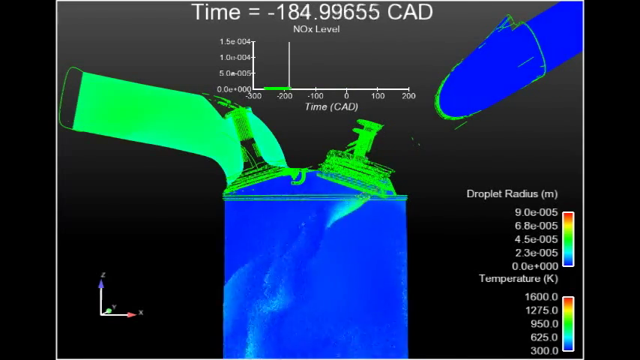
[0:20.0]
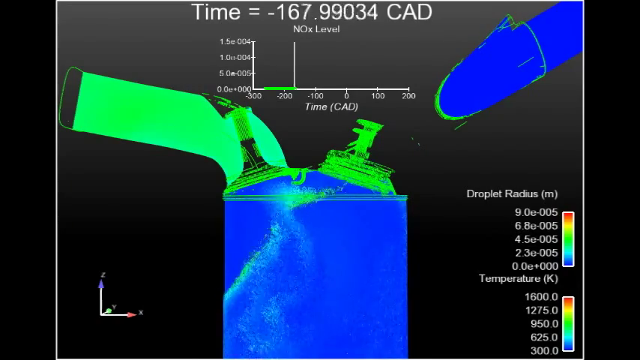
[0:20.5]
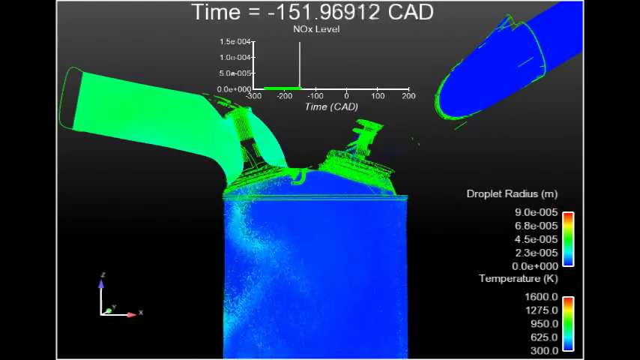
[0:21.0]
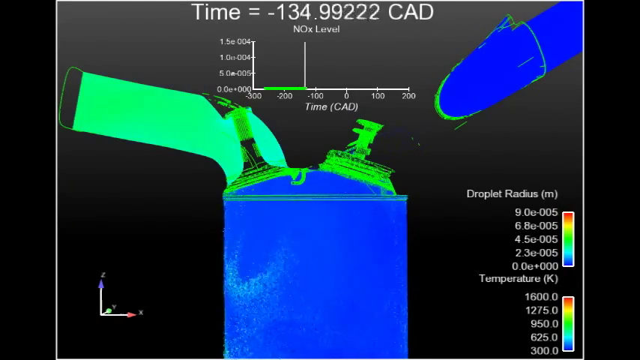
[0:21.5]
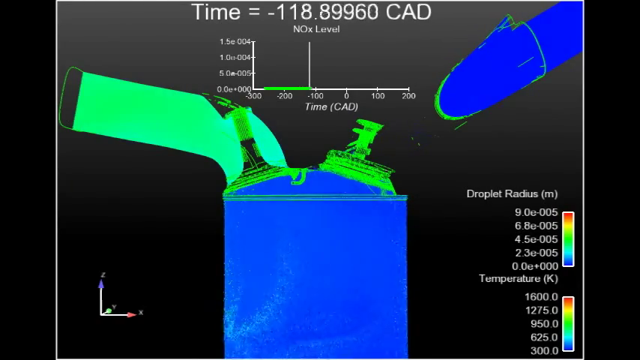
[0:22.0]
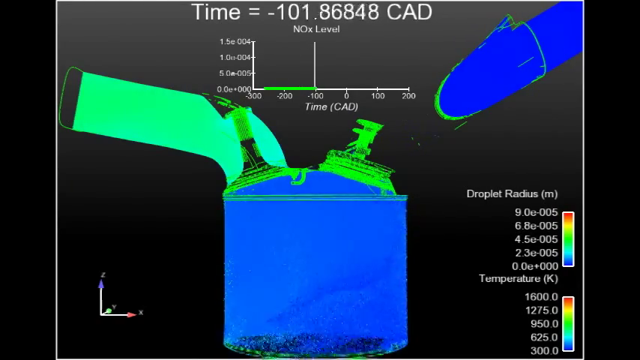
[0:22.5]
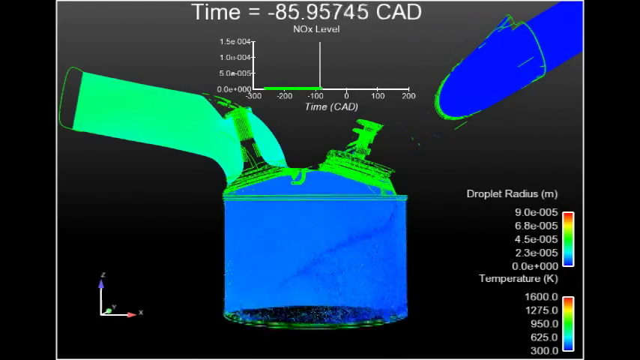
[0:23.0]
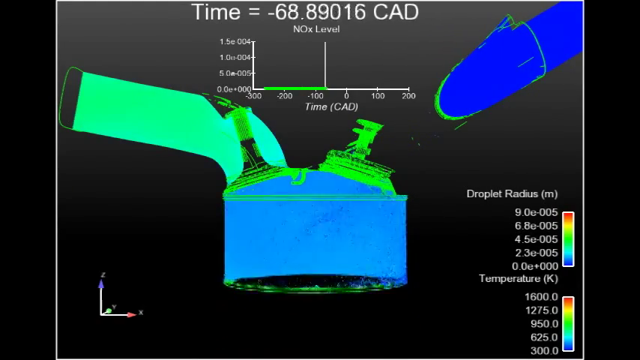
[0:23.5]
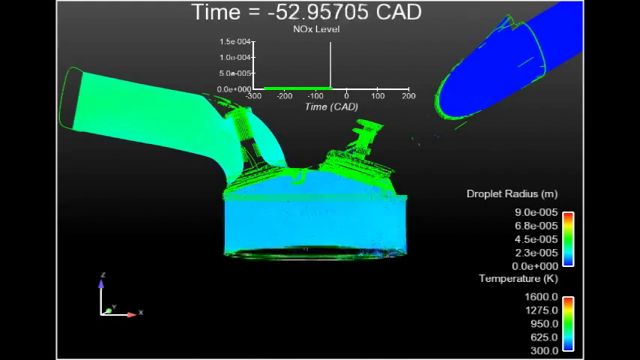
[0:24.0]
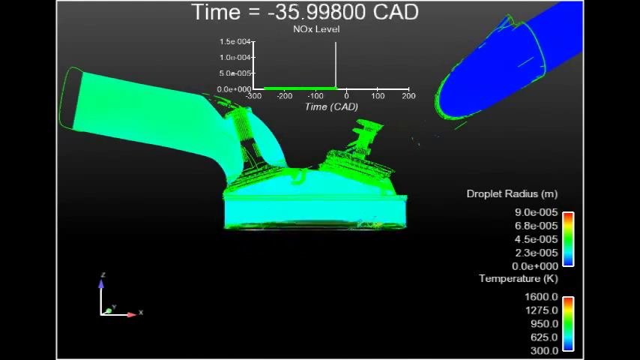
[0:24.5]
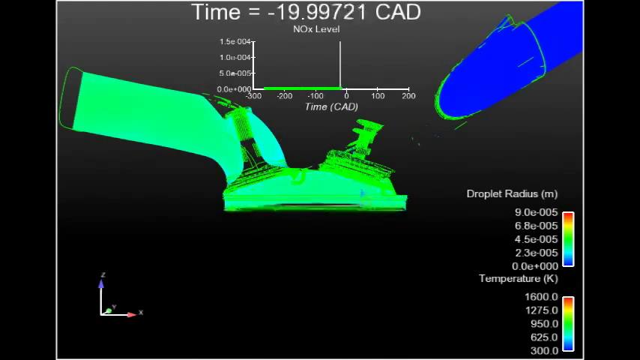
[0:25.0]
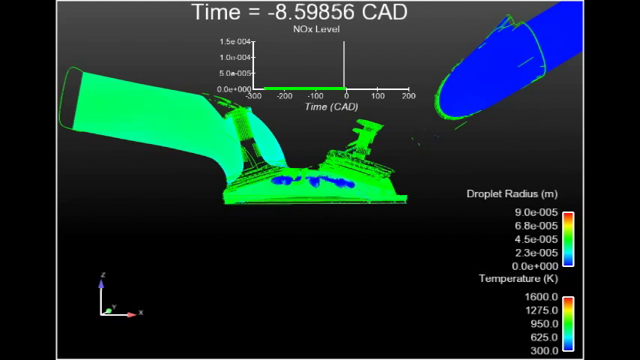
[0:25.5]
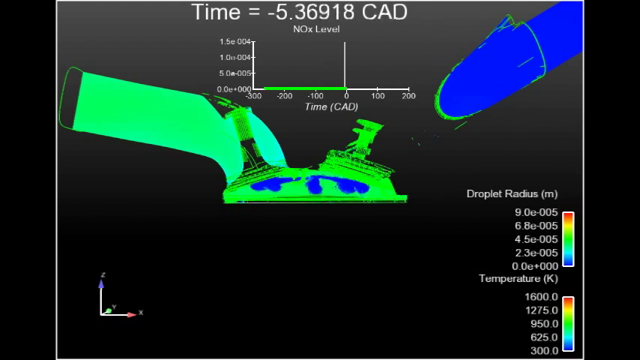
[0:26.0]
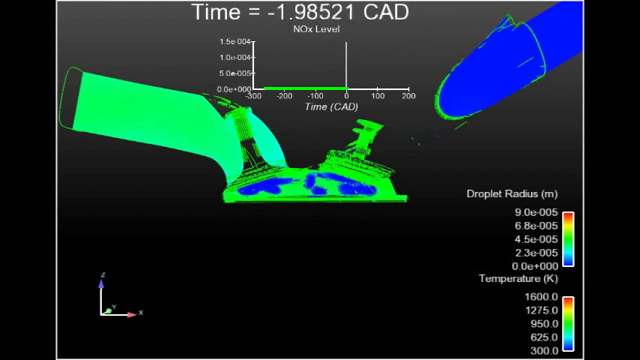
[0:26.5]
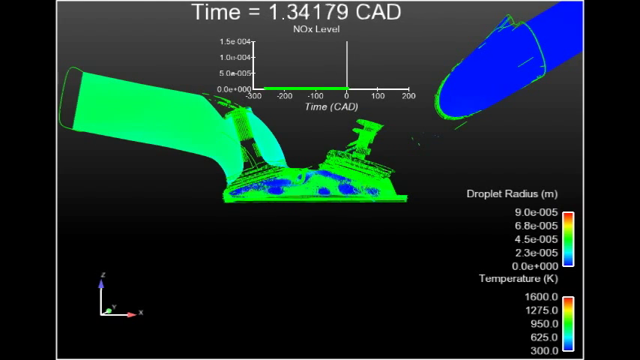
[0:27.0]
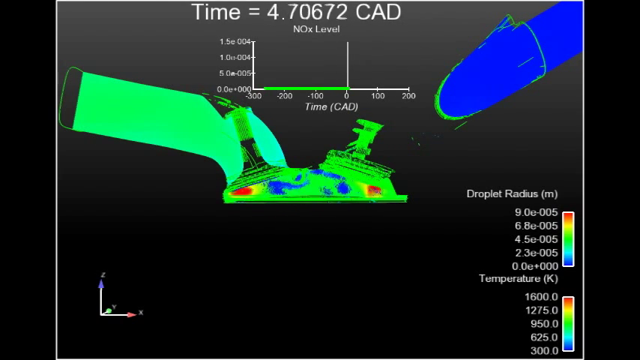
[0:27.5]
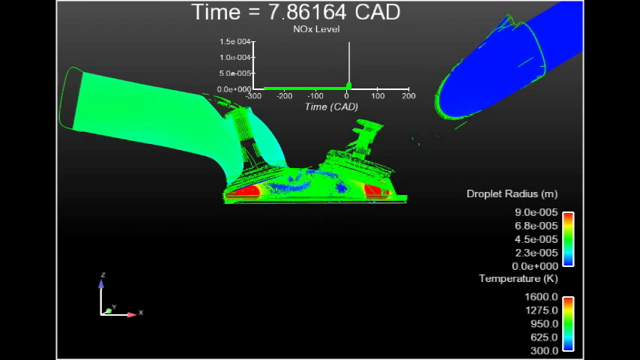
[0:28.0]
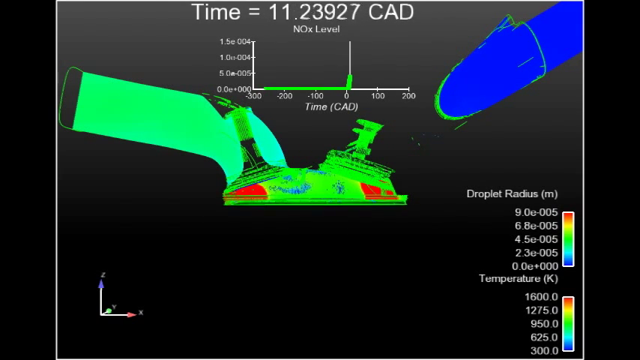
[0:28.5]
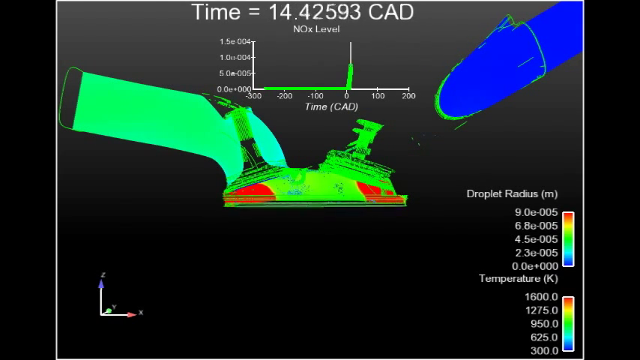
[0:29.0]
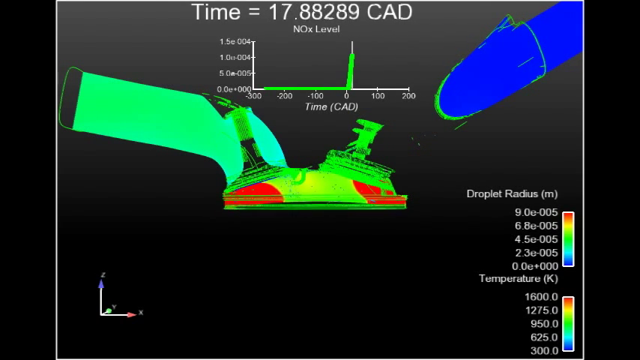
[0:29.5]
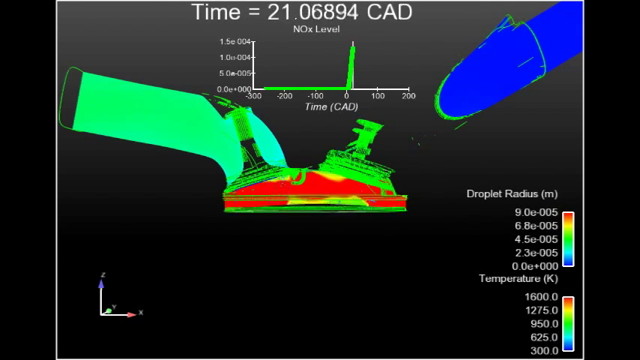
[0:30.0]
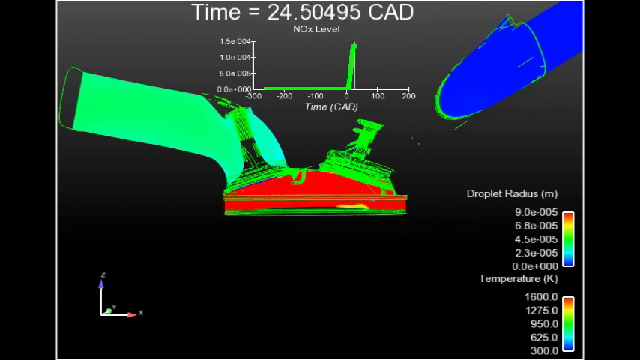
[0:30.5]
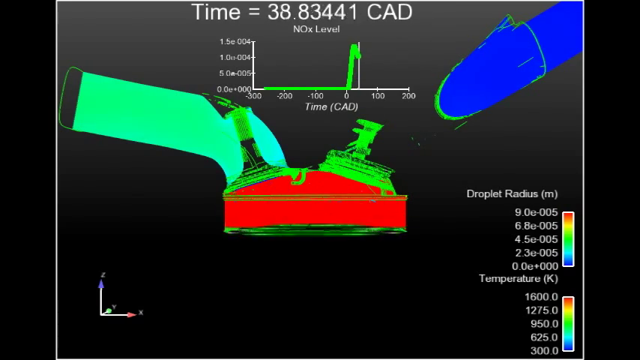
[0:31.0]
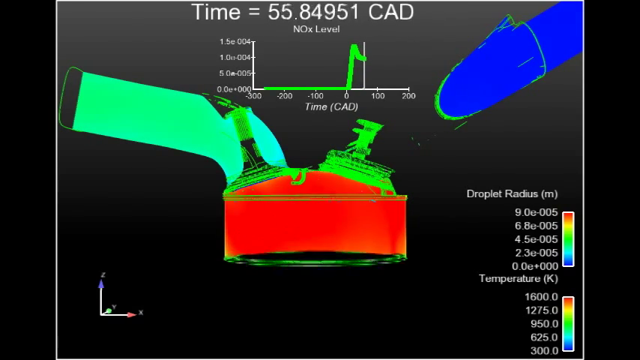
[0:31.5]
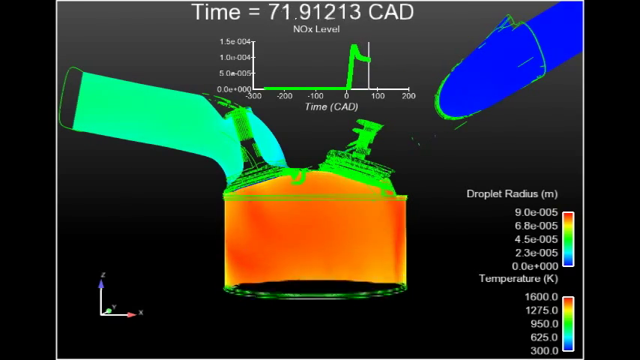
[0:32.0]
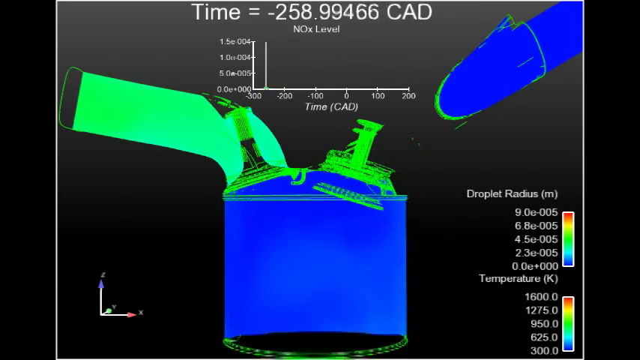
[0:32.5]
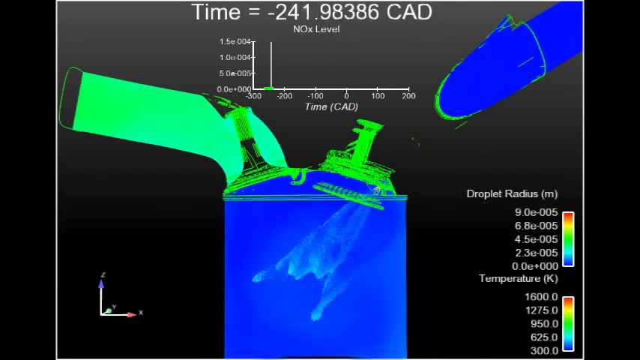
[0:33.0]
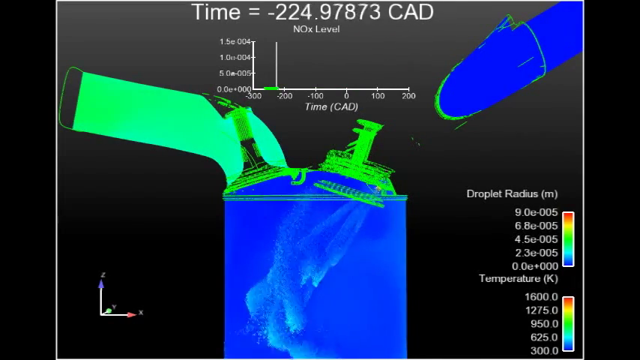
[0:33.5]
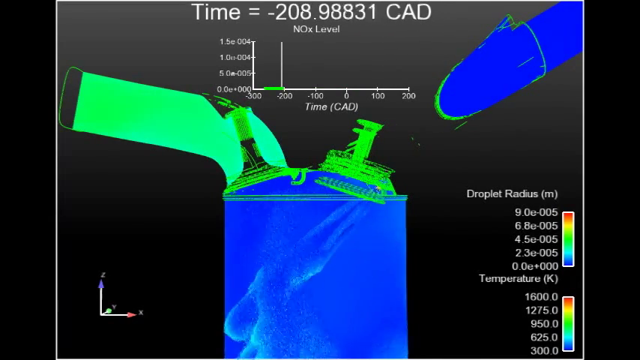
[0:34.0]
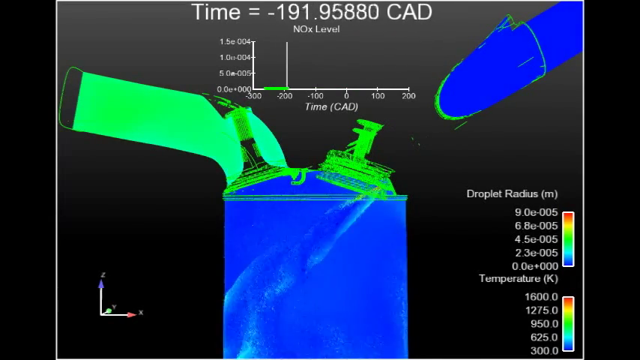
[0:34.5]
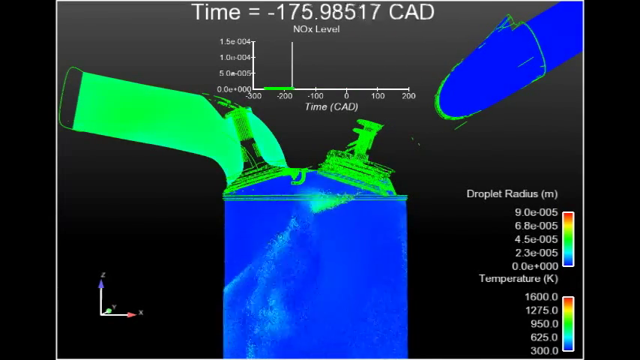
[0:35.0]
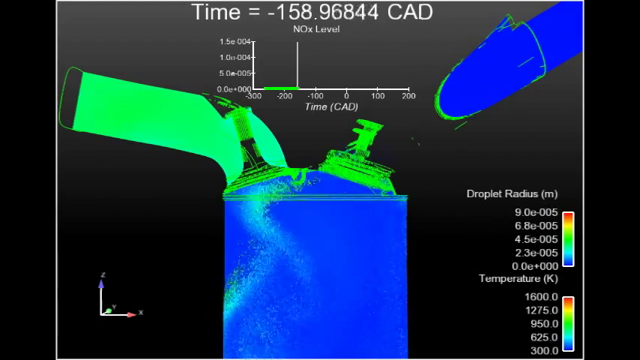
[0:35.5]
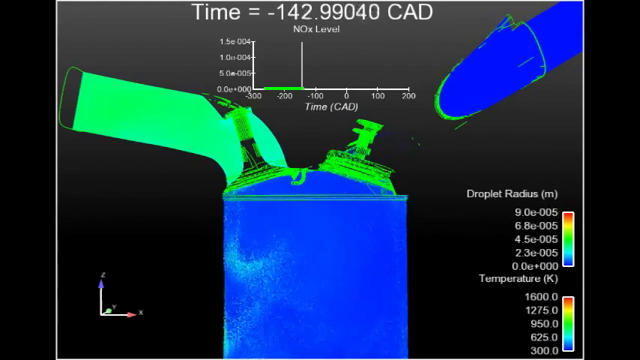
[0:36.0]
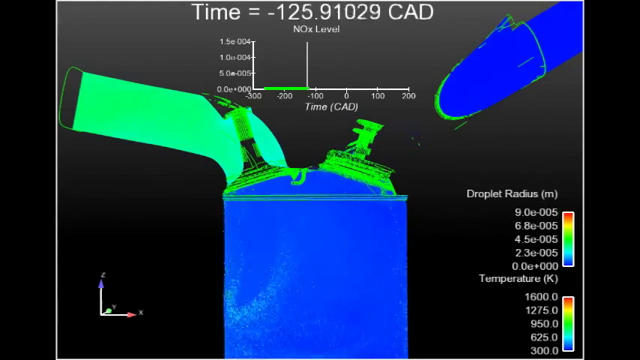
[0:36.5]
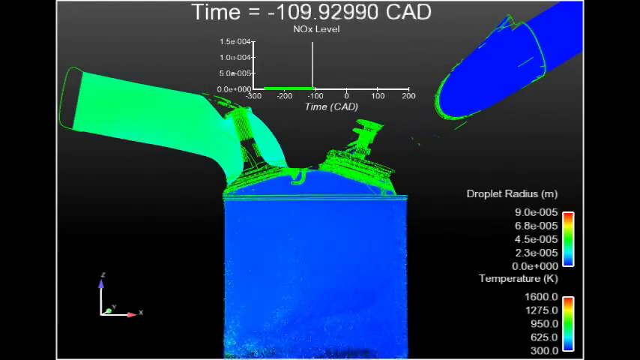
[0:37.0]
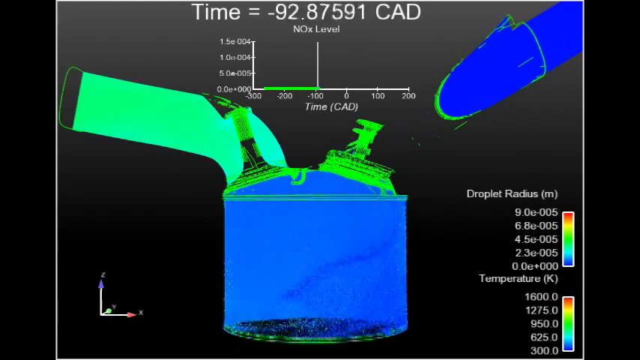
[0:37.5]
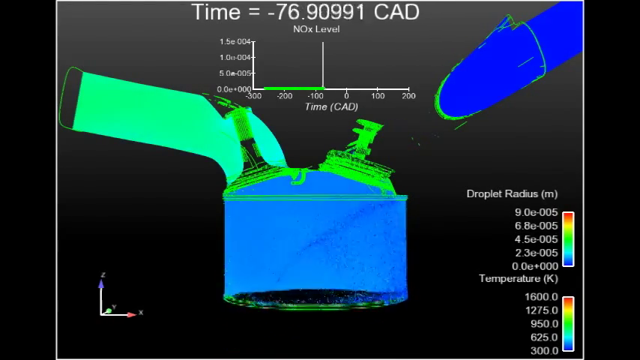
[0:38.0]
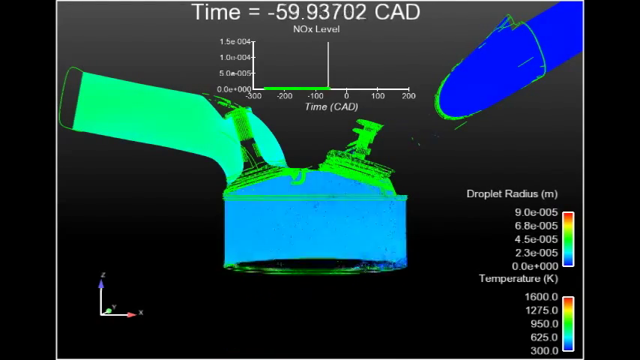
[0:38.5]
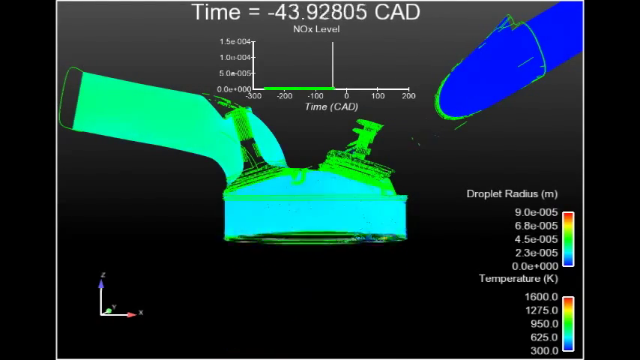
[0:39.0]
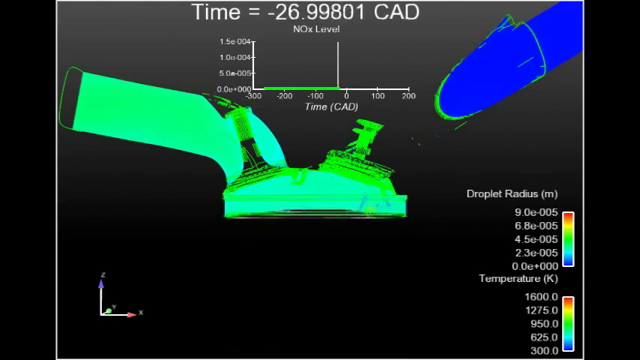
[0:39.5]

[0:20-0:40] The computer graphic of the engine combustion continues, shown in blue and green. A green mist disperses throughout the graphic of what seems to be the engine, possibly showing how fuel is dispersed within the cylinder or chamber. At the top, a counter still counts down and reads "time equals minus CAD." Below it is a small graph-style chart with lines and numbers, possibly showing the timing of the combustion. A key on the bottom right shows "droplet radius" transitioning from red to green to blue with different numbers next to it.